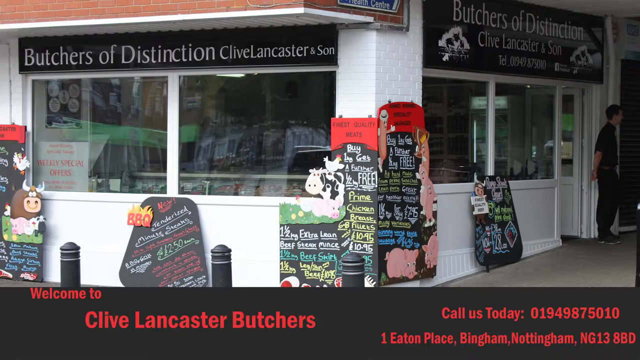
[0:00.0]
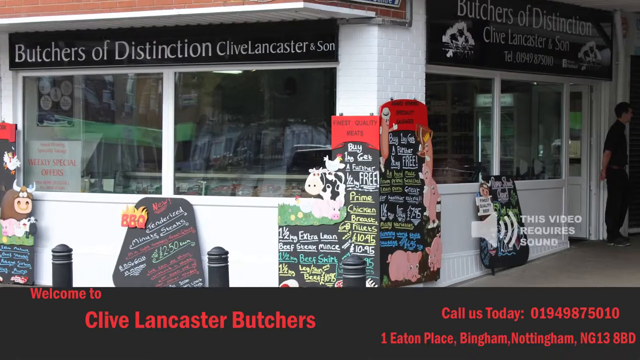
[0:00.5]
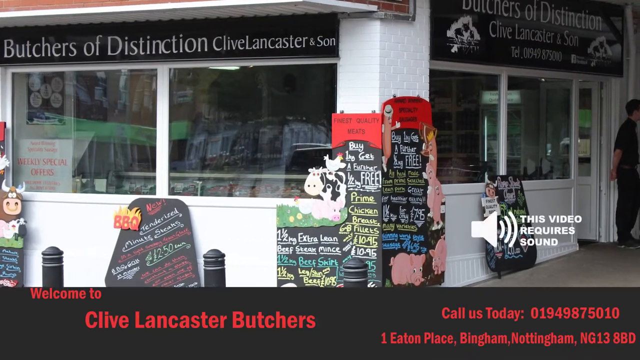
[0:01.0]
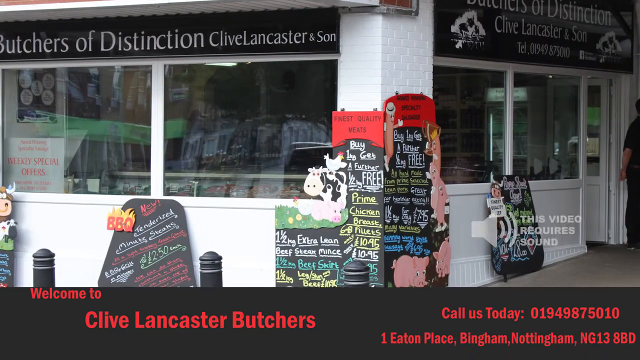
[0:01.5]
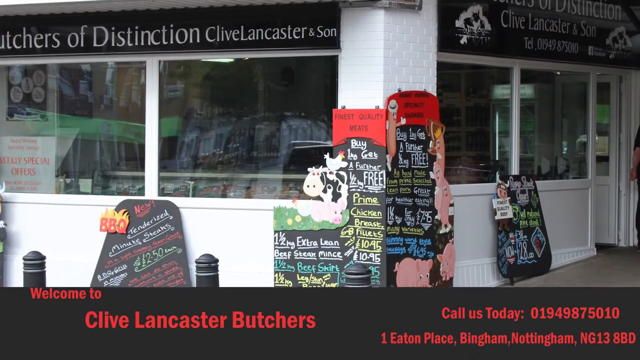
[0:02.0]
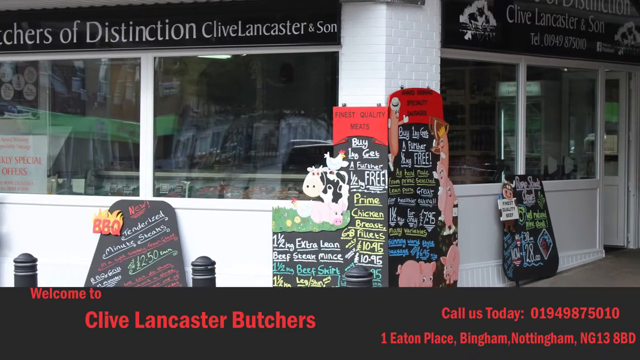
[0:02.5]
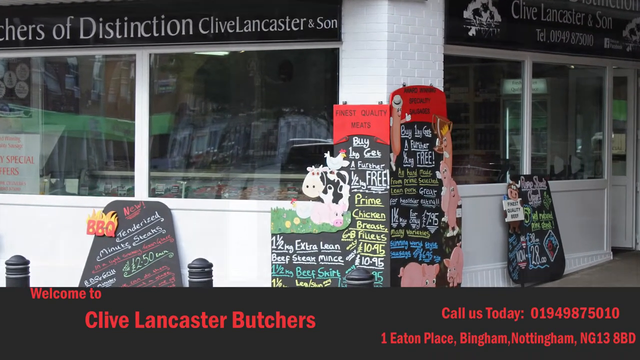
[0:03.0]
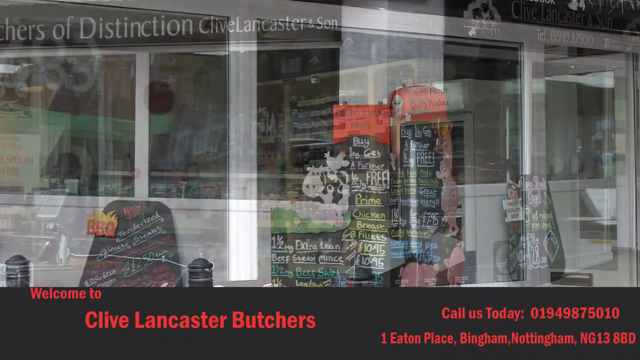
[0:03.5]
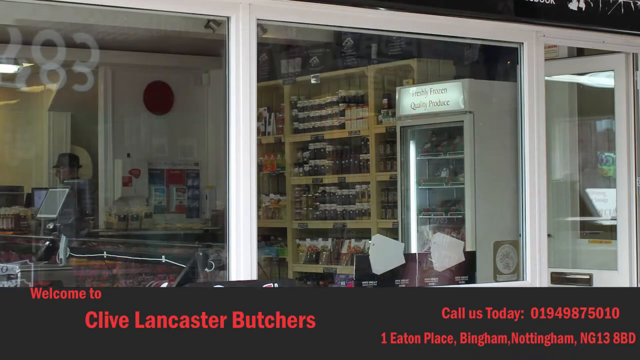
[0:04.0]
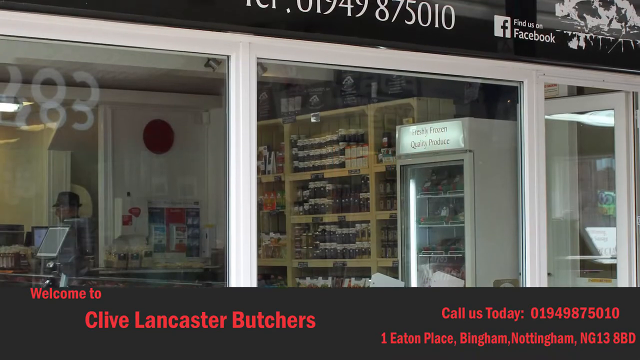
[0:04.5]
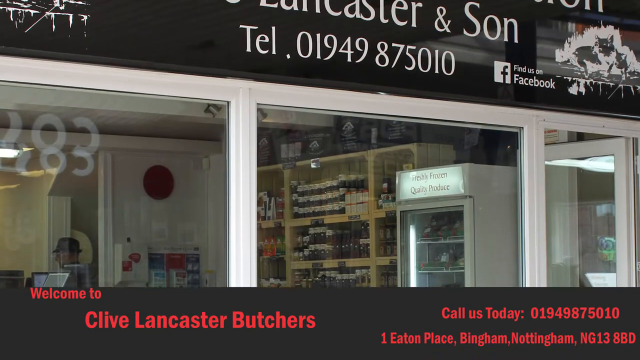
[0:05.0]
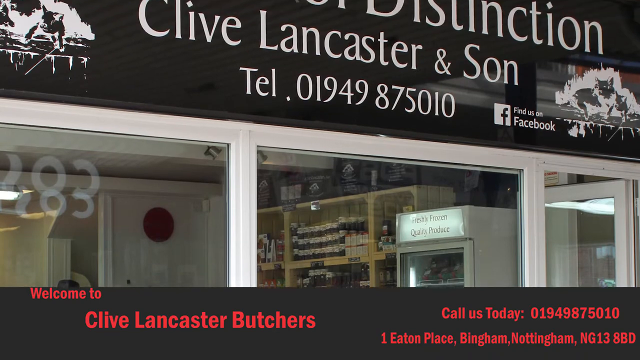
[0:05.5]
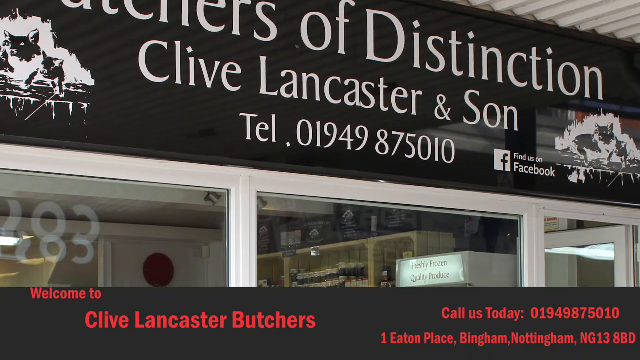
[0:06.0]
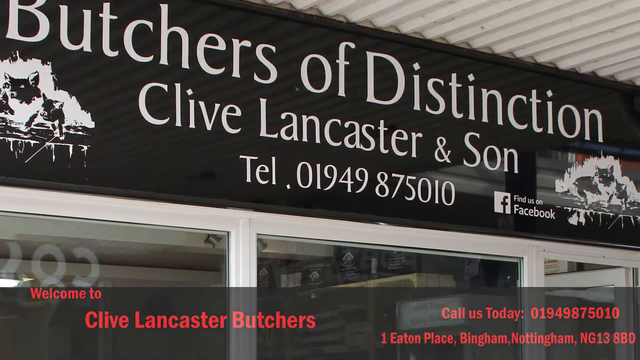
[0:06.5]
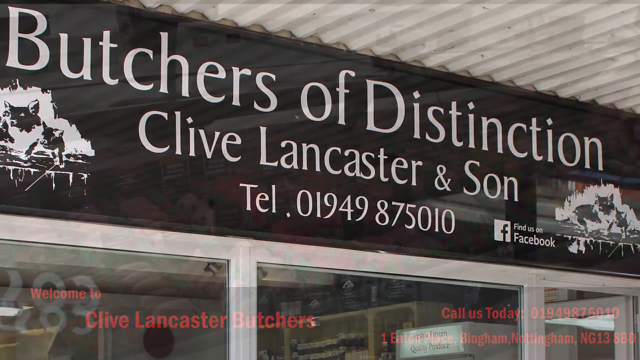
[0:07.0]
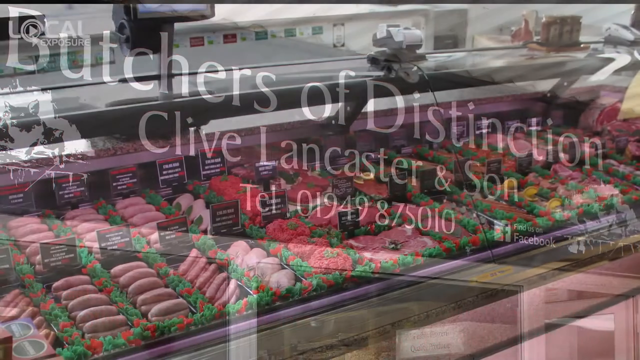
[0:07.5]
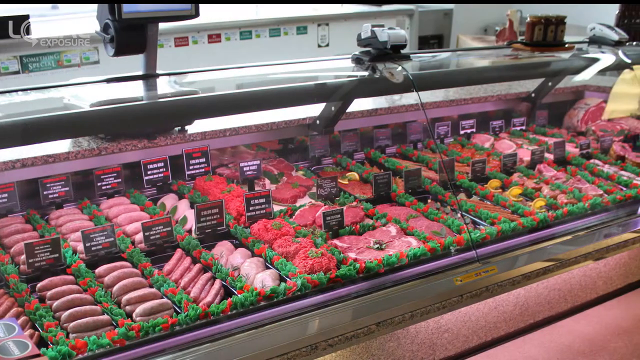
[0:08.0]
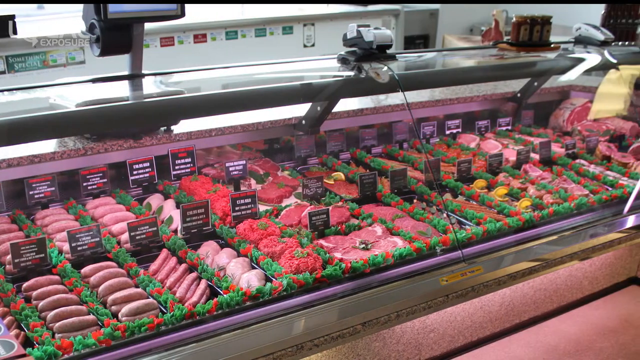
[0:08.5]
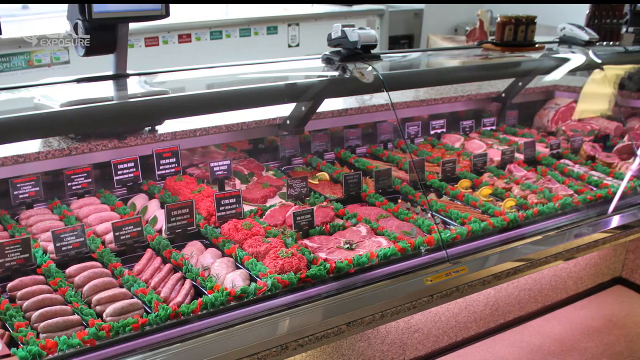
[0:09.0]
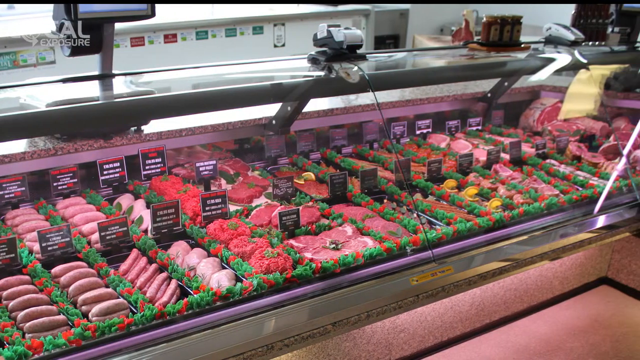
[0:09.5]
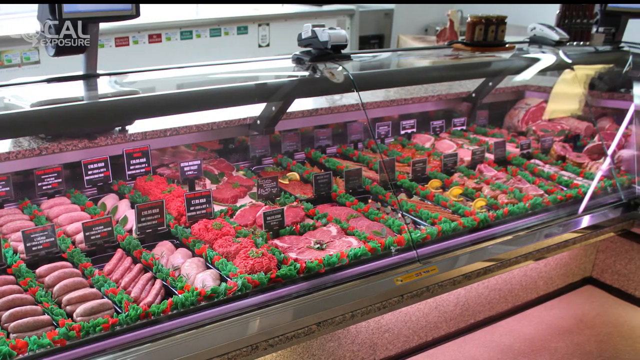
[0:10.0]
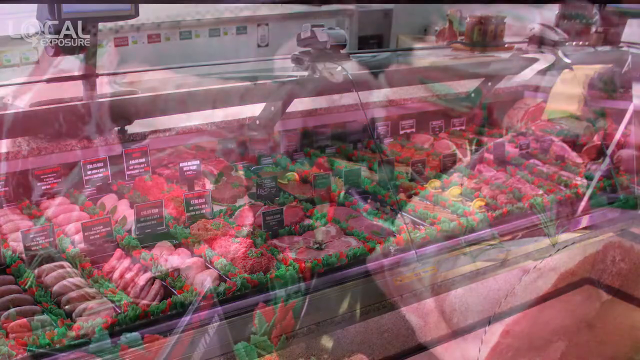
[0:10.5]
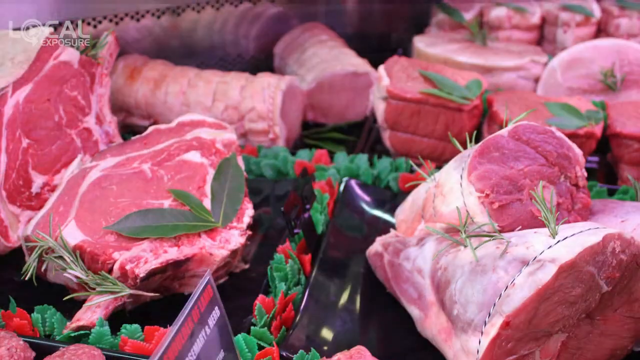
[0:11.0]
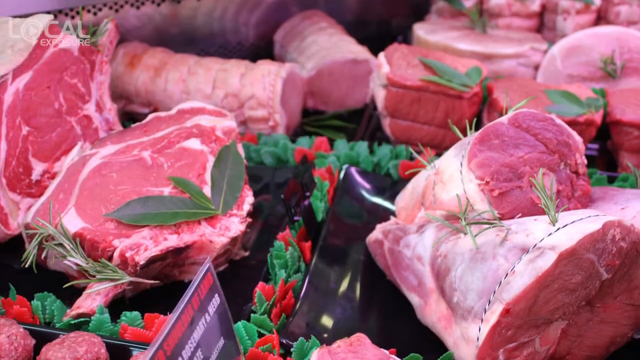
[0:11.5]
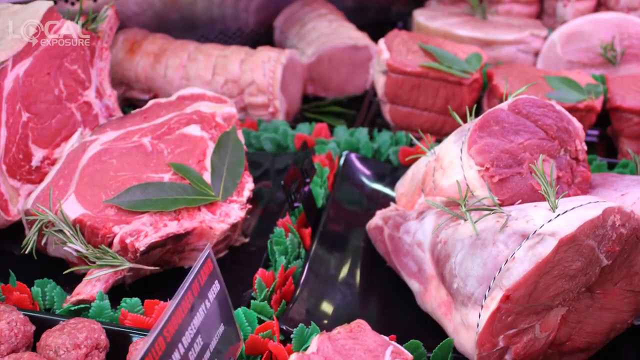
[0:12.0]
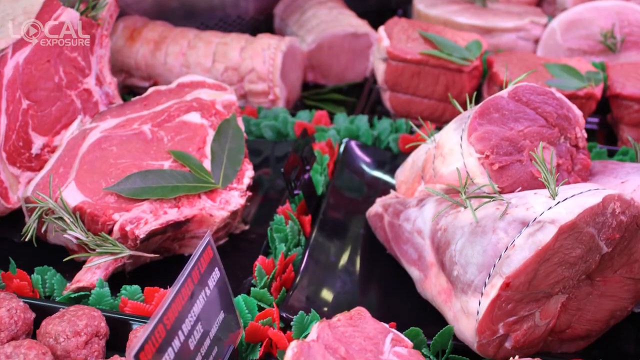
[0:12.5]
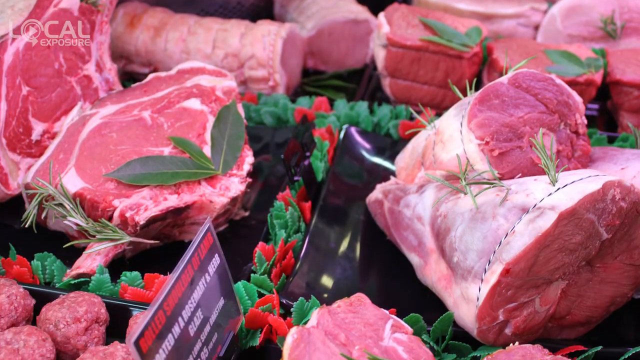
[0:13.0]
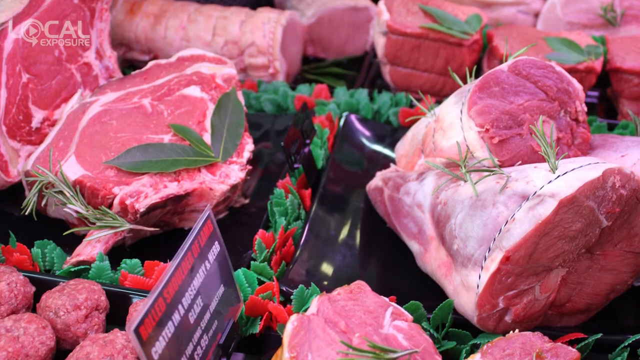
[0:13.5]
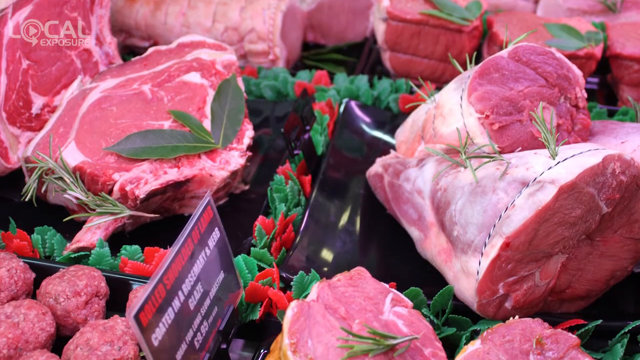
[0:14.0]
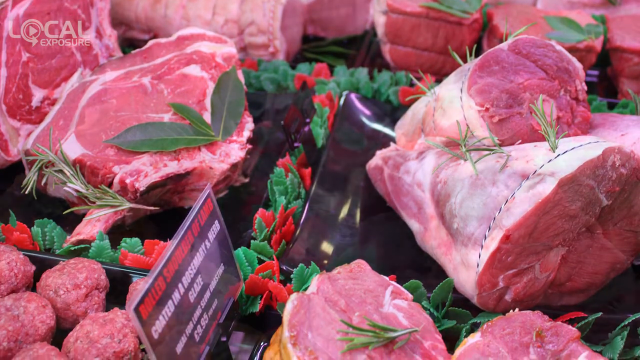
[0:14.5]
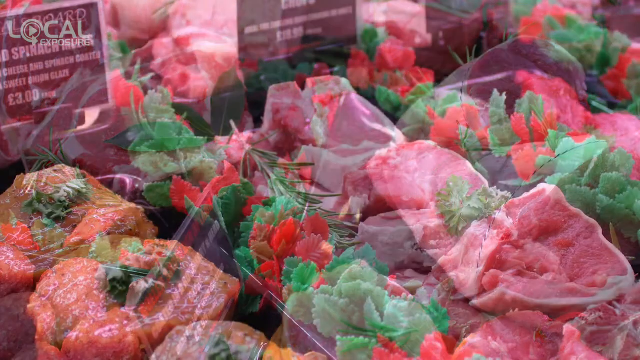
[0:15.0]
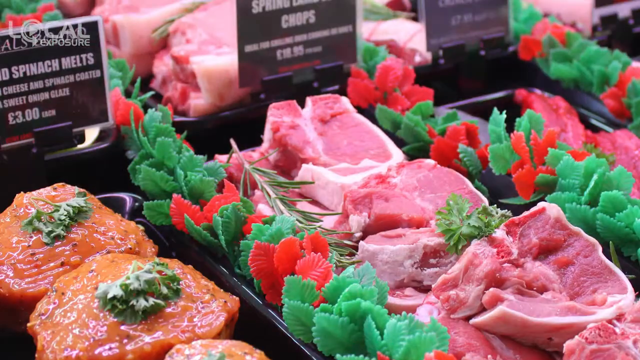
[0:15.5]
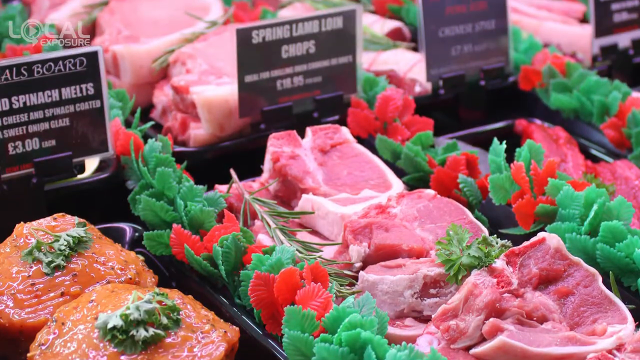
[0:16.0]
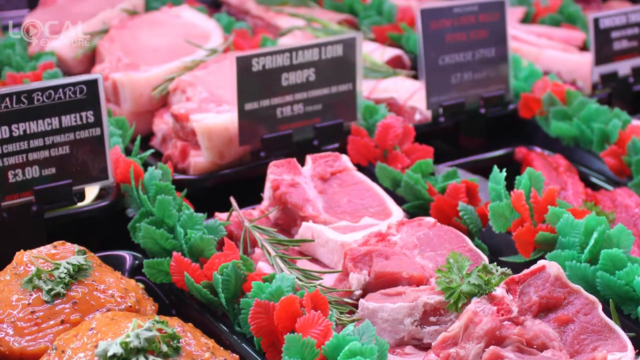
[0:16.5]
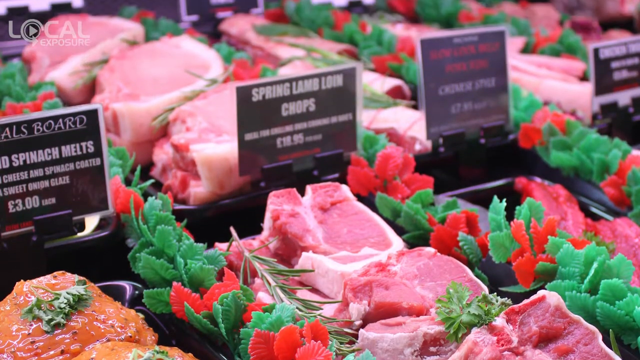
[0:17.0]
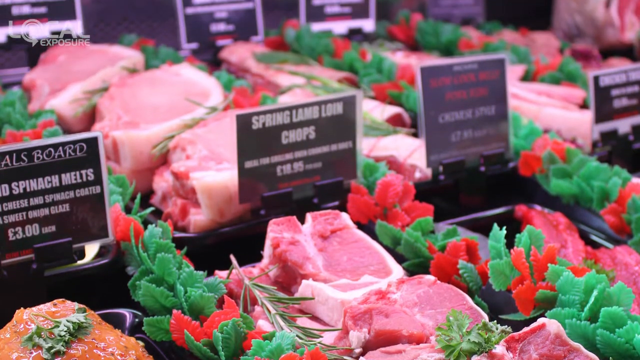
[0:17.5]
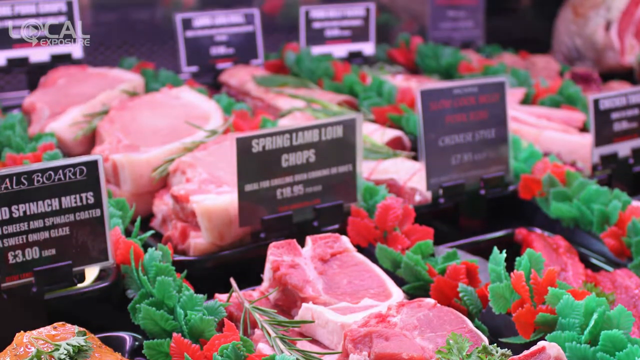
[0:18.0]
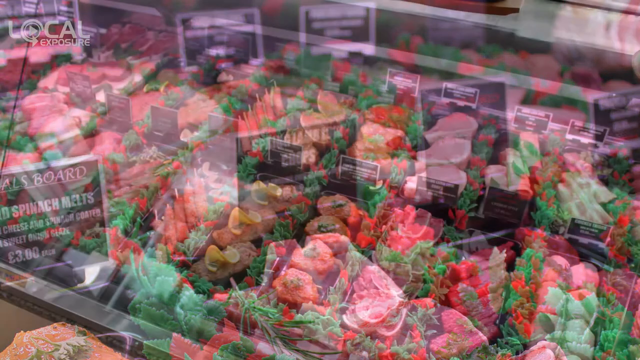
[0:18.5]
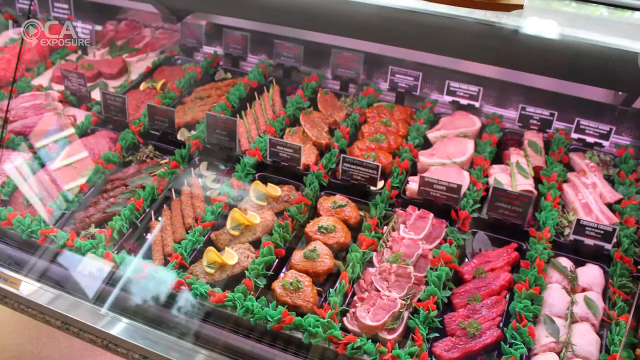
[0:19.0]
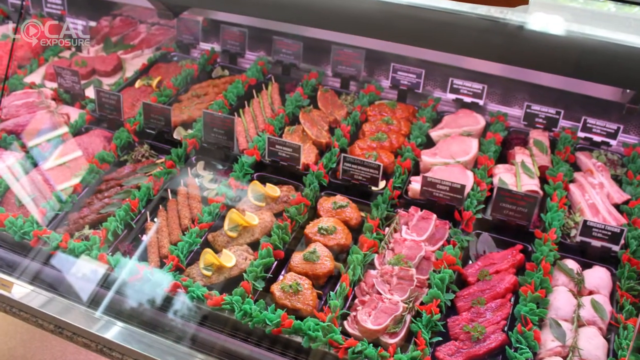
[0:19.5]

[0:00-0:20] This appears to be some kind of promotional clip. The camera zooms into the outside of a building that looks to be a white brick building. On the outside there is an image of a cow with a lot of writing, and the sign seems to say "butchers of distinction Clive Lancaster and son". Under it, red text says "welcome to Clive Lancaster butchers call us today 01949", followed by the rest of a phone number. The video then shows the interior of the butcher shop, with a lot of meat behind the counter. It zooms in on some of the cuts of meat, which are garnished with some kind of green garnish, showing many different meats, including what looks like lamb chops, and different specials. Different images of the meats are zoomed in on.